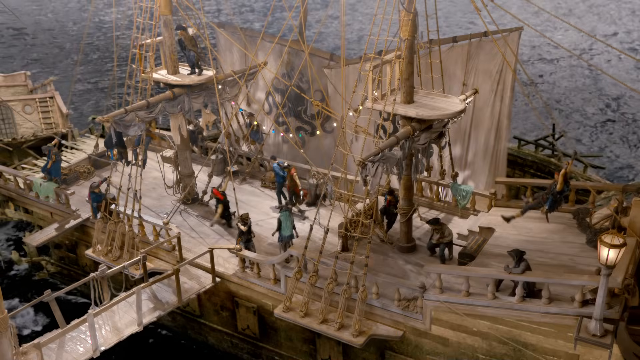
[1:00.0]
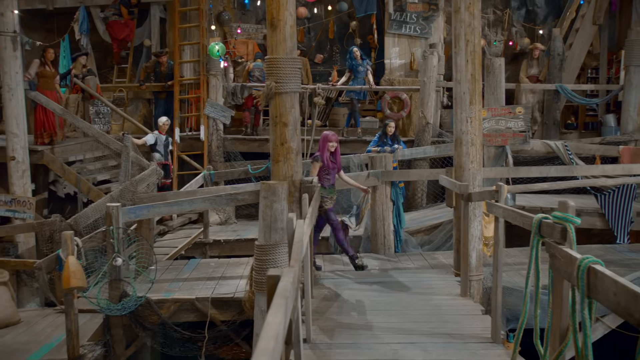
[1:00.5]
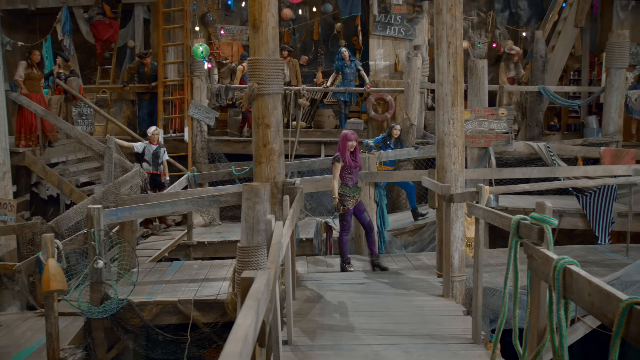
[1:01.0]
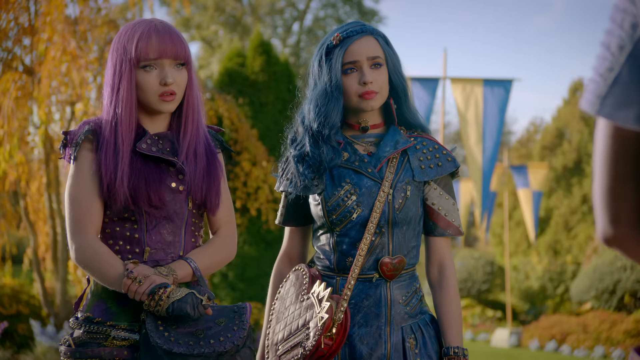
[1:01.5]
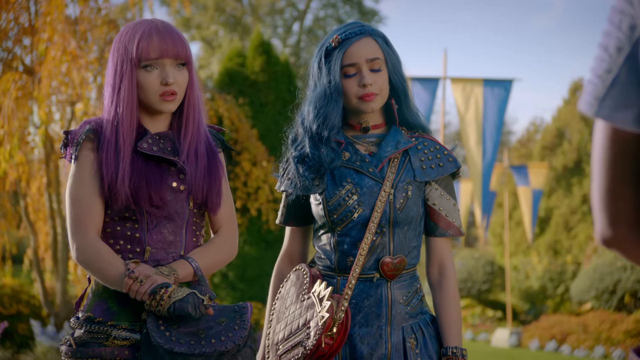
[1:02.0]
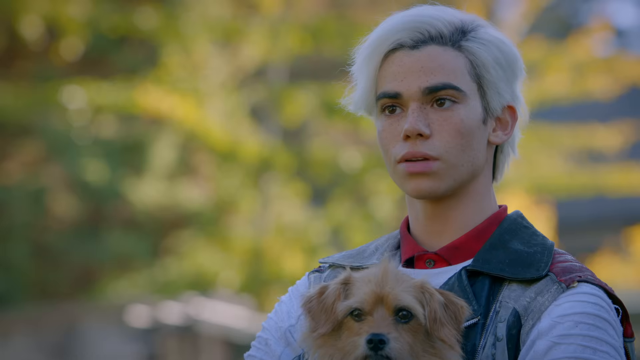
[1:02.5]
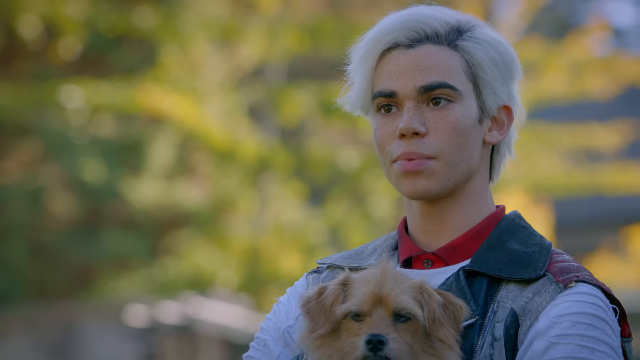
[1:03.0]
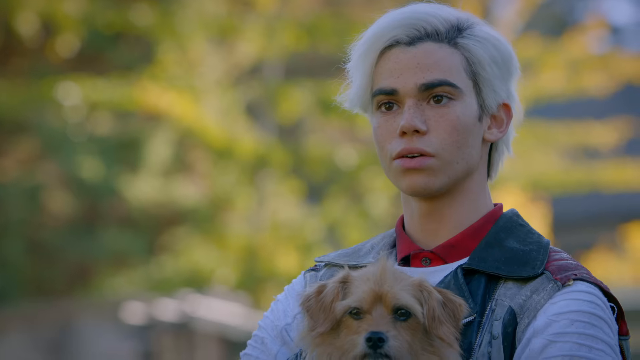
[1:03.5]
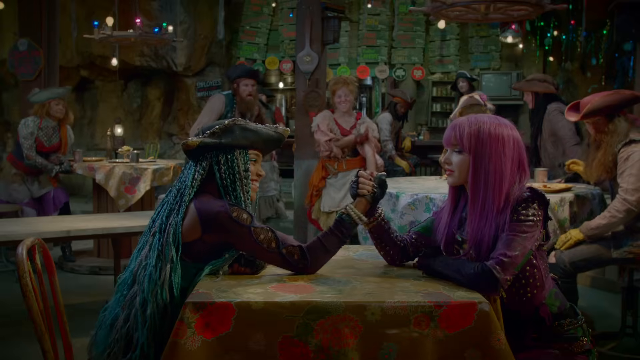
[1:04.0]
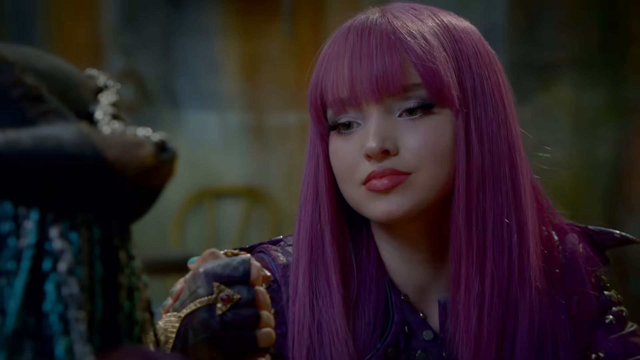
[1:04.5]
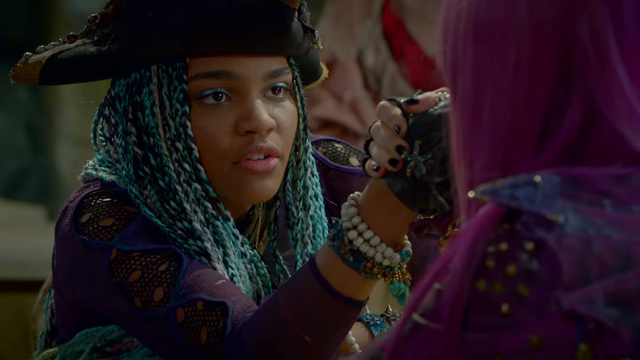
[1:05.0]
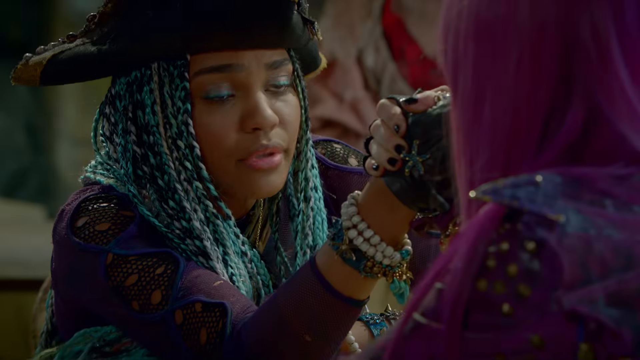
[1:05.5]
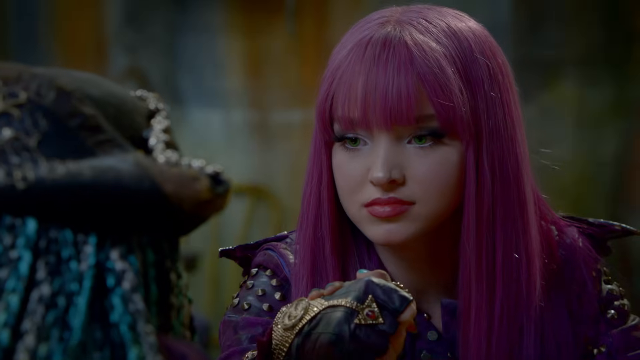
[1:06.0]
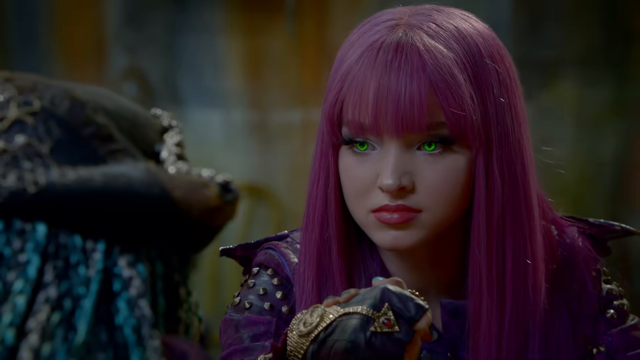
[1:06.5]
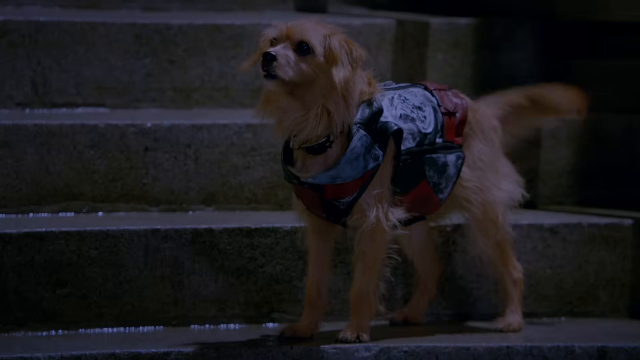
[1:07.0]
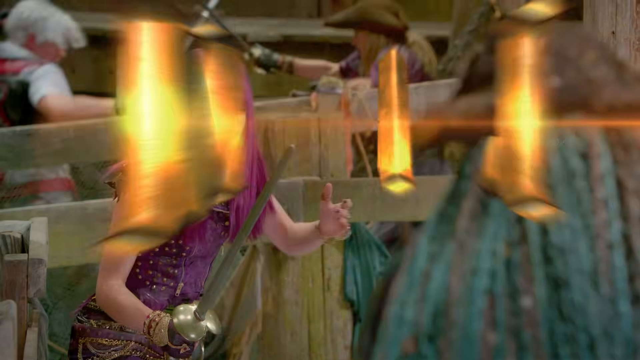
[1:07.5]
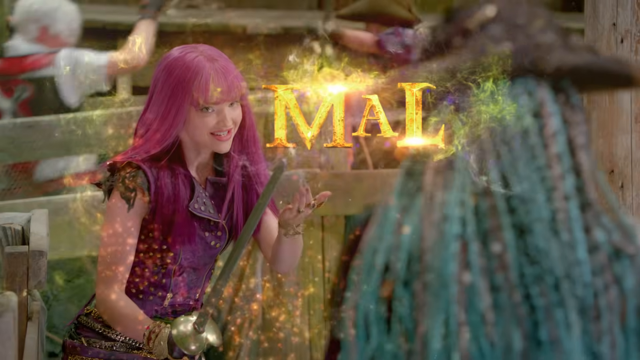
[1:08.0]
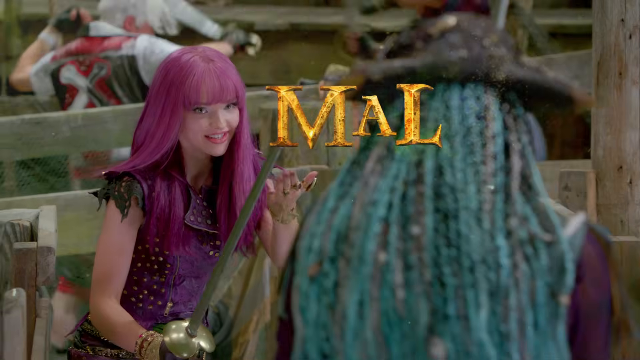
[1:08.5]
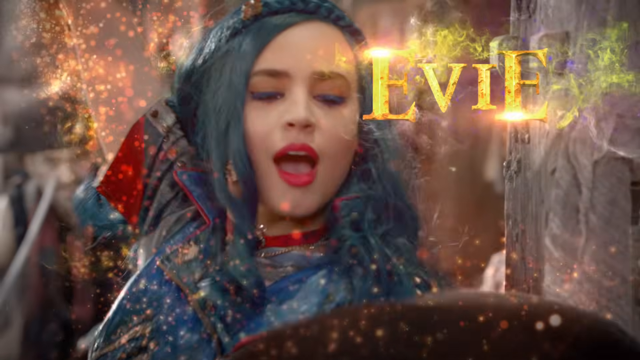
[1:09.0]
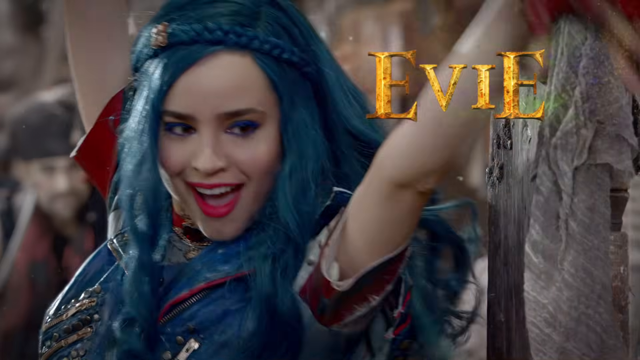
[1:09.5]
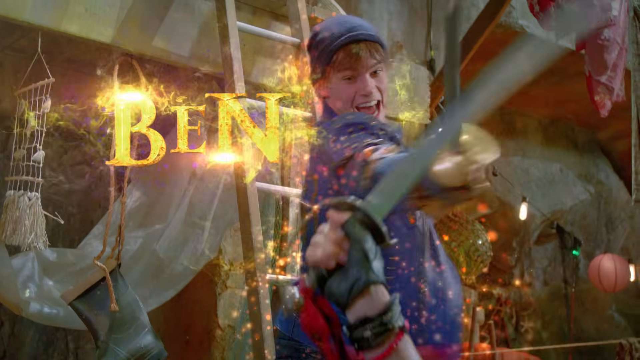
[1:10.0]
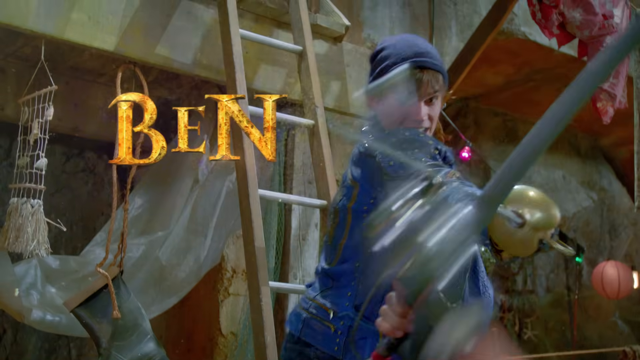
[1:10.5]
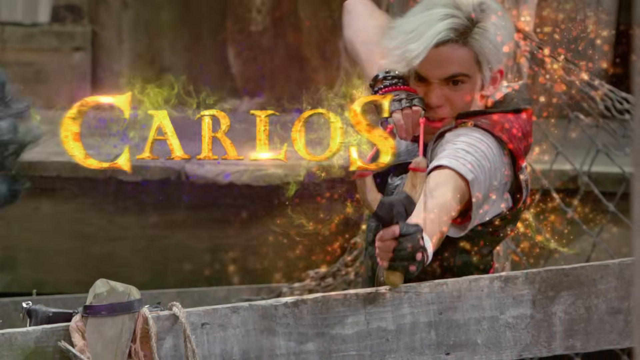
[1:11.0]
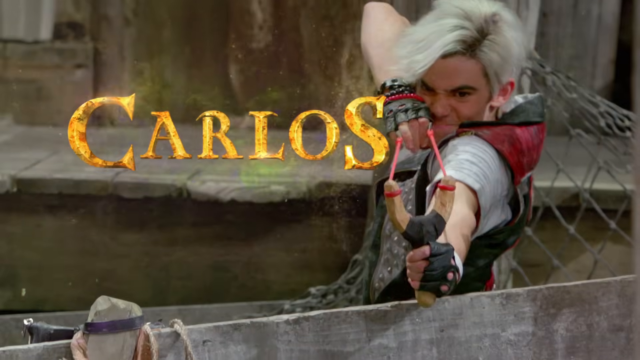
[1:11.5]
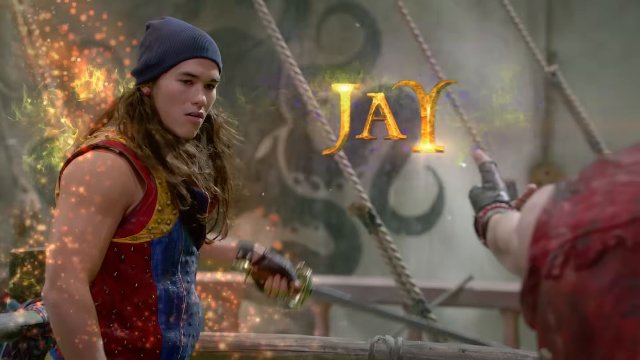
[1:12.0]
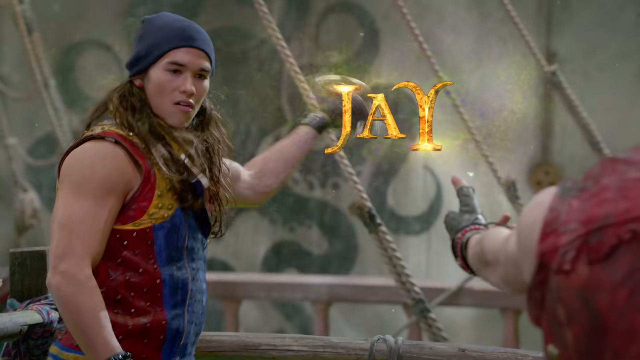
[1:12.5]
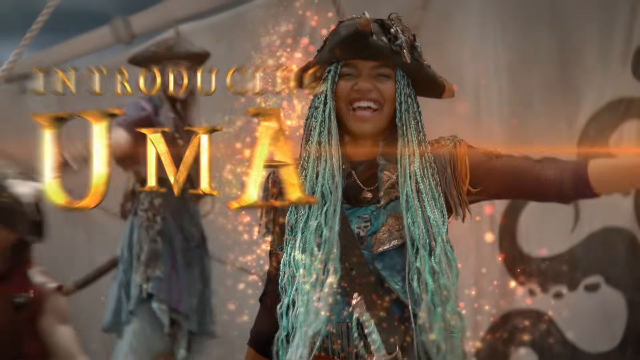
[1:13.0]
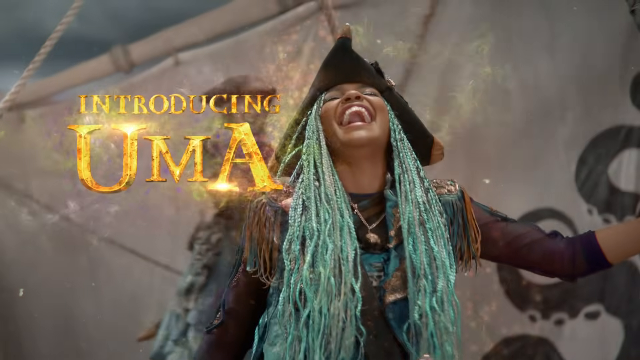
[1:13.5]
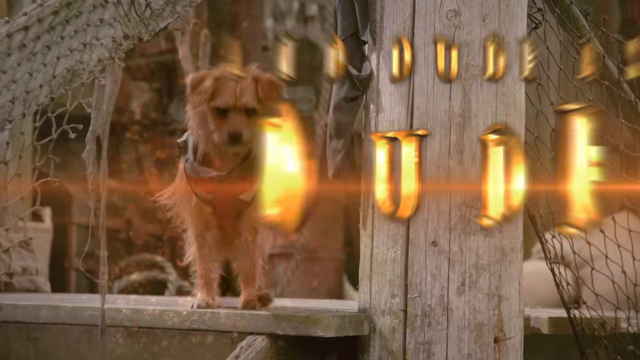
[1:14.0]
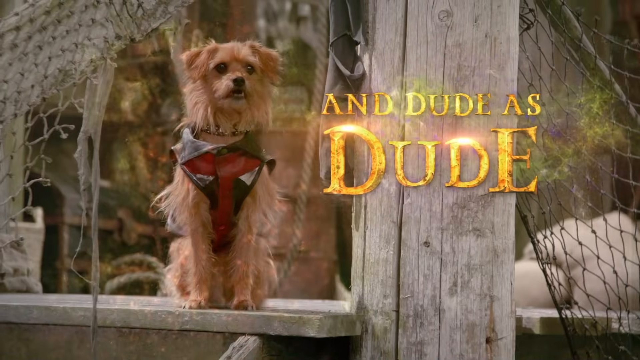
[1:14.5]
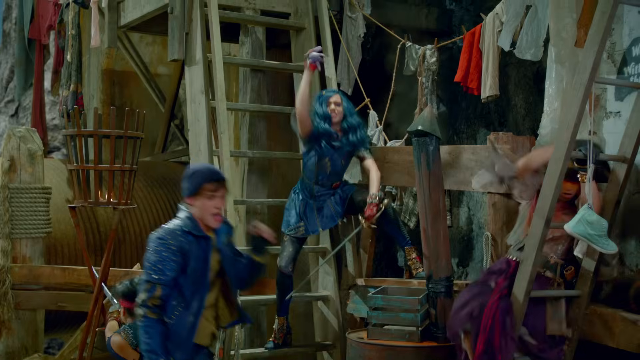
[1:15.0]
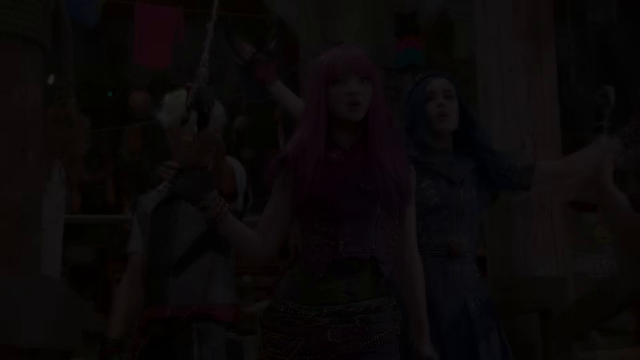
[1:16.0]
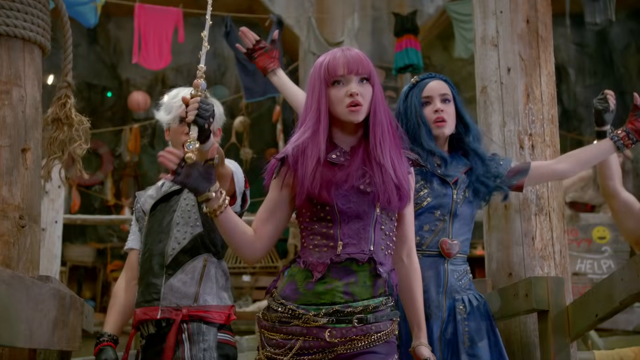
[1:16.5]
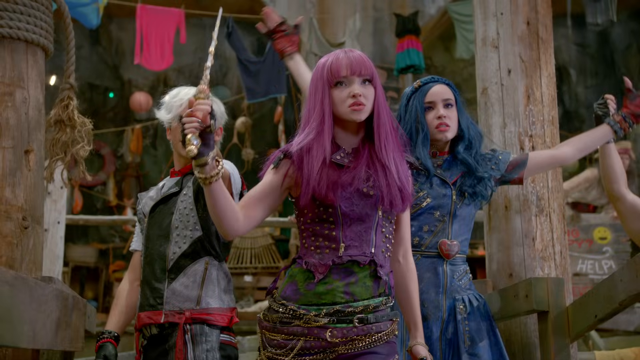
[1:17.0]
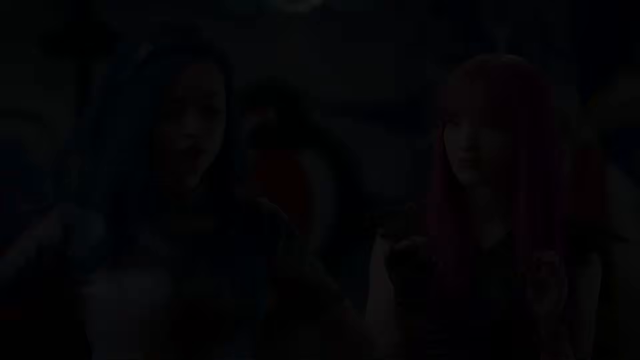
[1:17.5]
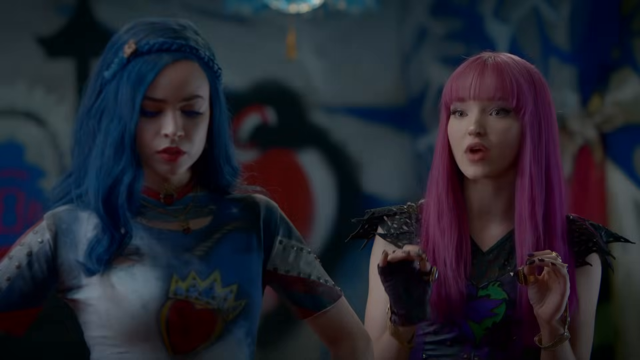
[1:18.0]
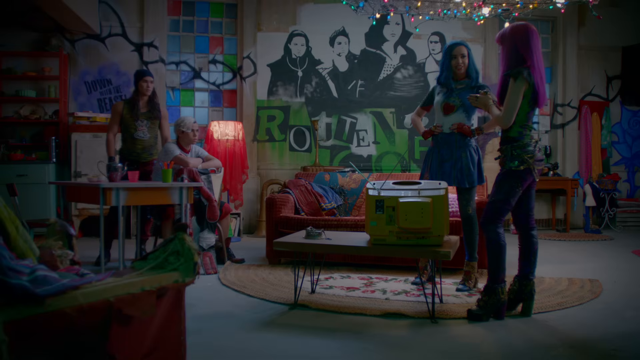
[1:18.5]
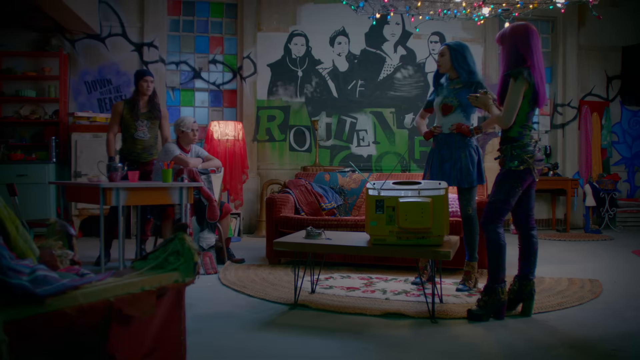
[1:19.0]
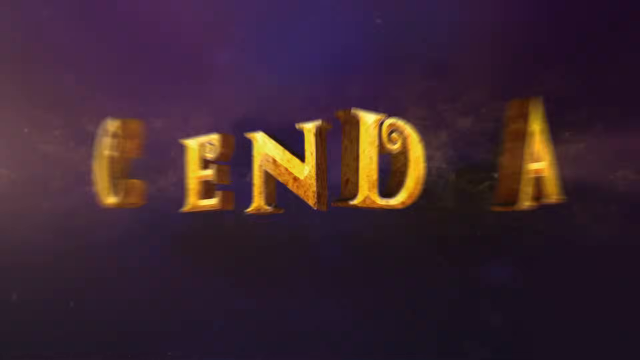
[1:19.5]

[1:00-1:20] An aerial view shows a large ship with a lot of people on it, looking down so the top of it is visible. A close-up shows the one with purple hair about to arm wrestle the one with blue hair. Characters are shown and named on screen: Mal, Evie, Ben, Carlos, Shae, Uma and Jude, along with their alliances.